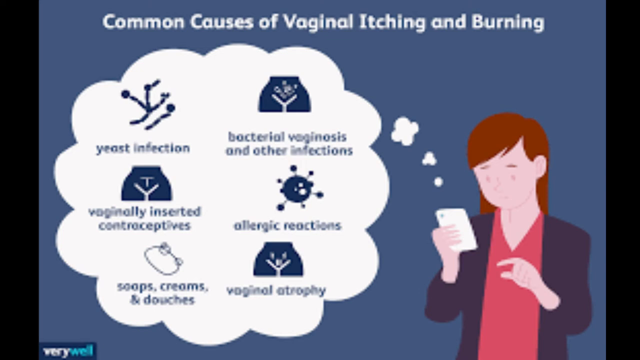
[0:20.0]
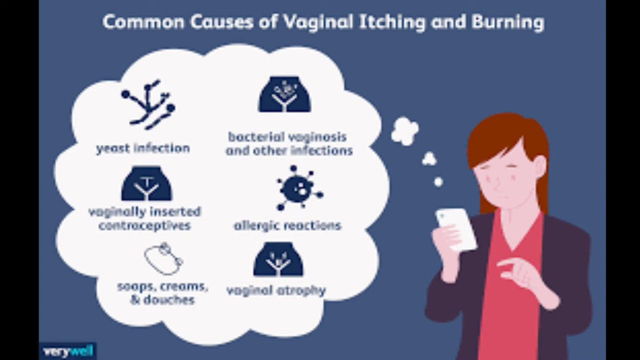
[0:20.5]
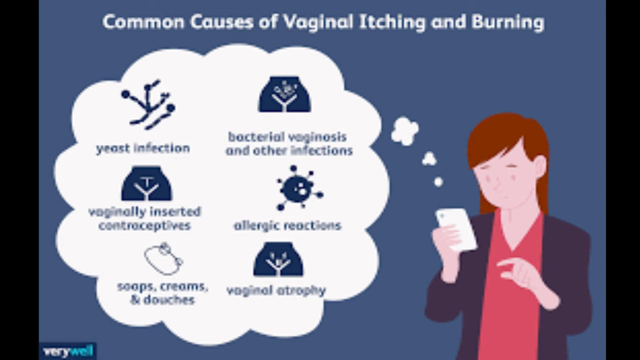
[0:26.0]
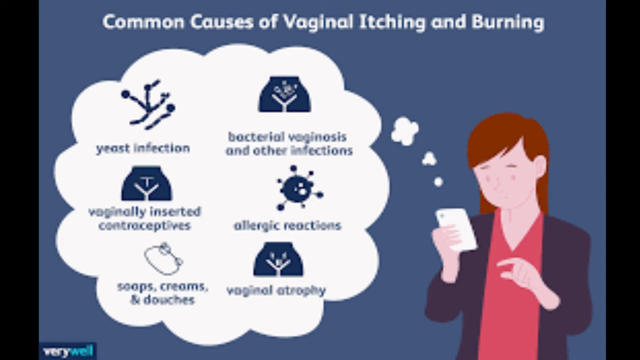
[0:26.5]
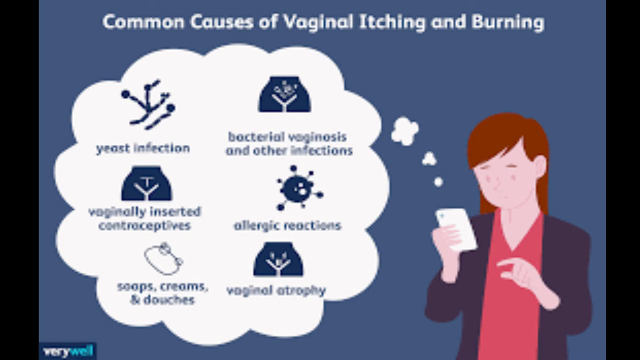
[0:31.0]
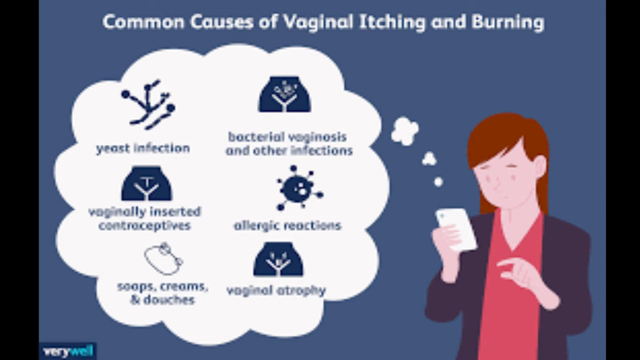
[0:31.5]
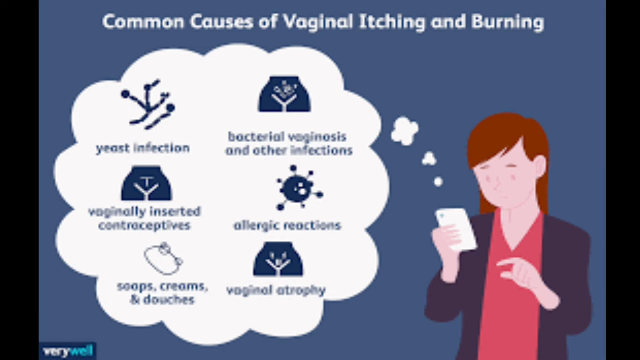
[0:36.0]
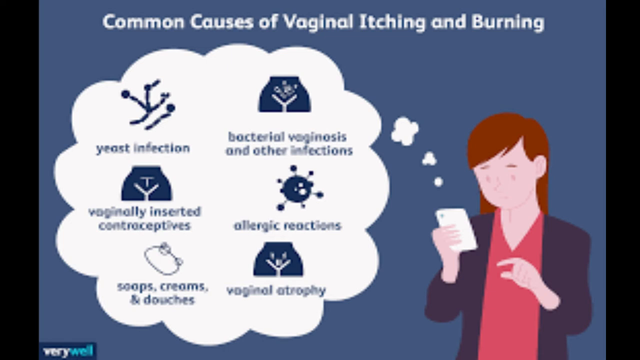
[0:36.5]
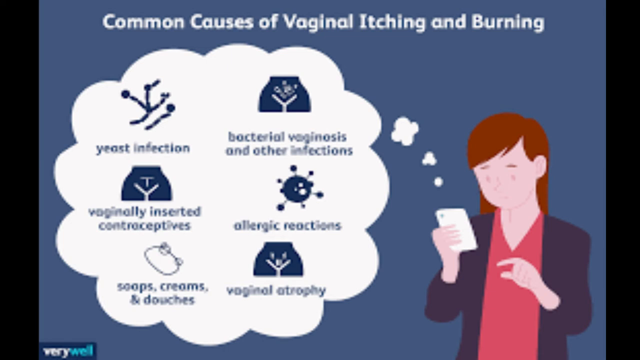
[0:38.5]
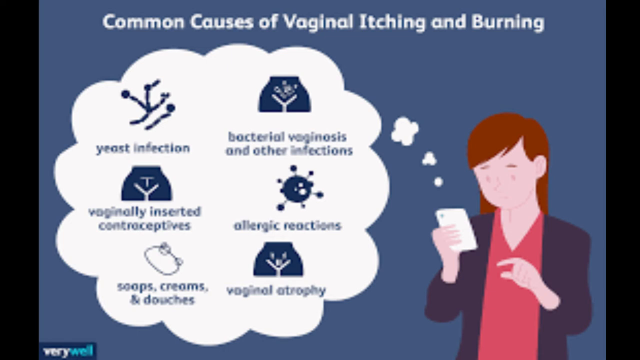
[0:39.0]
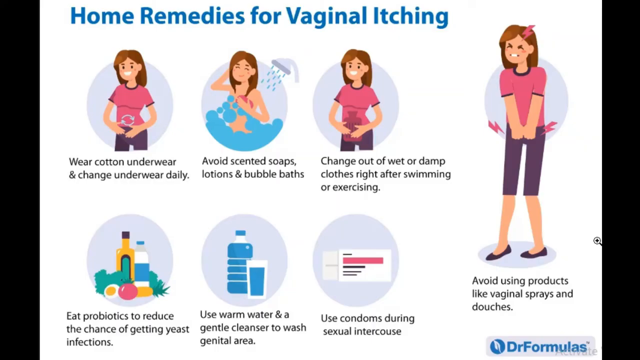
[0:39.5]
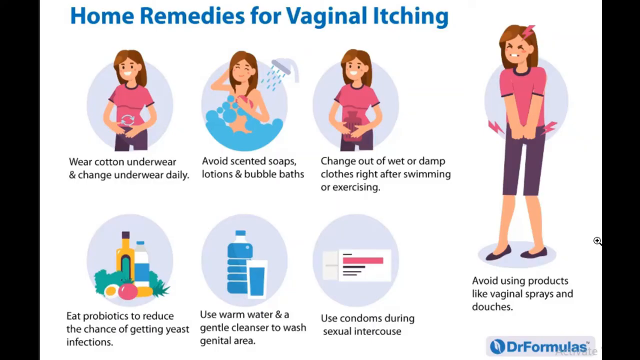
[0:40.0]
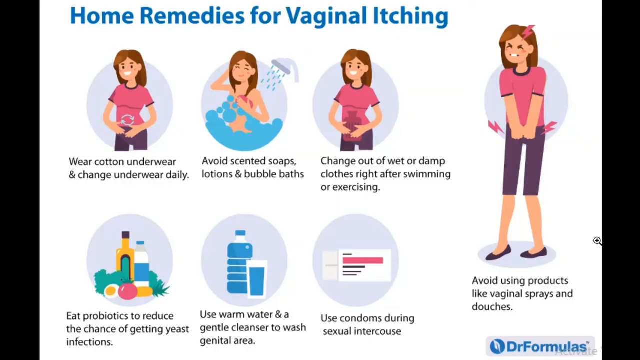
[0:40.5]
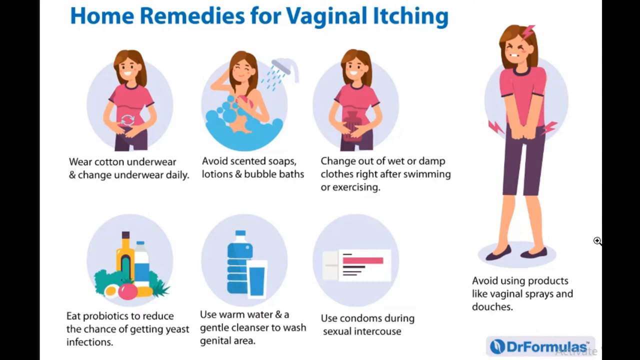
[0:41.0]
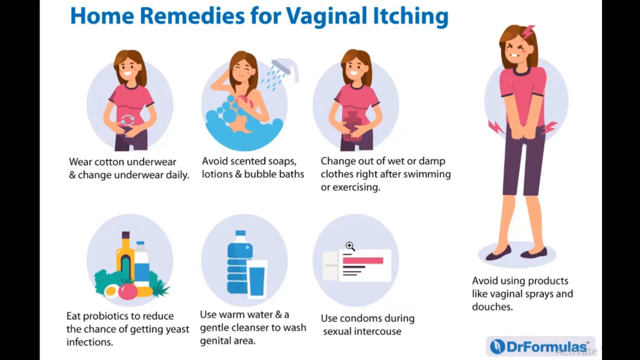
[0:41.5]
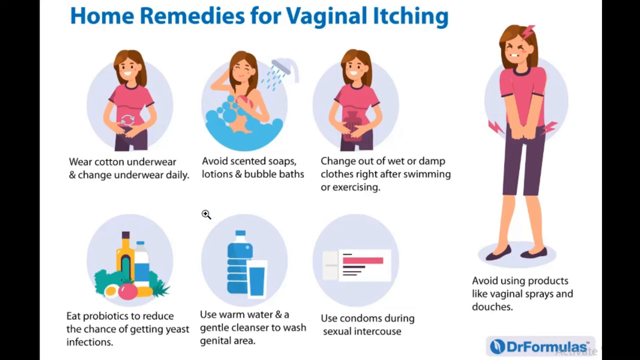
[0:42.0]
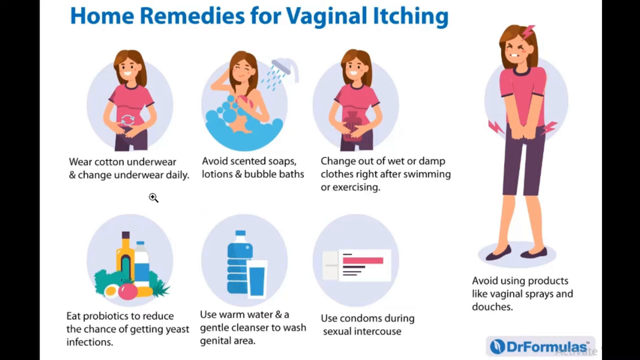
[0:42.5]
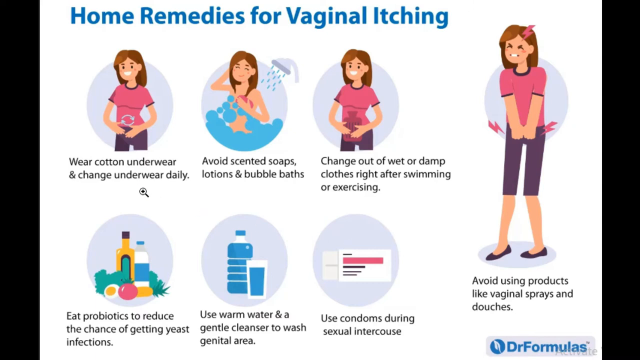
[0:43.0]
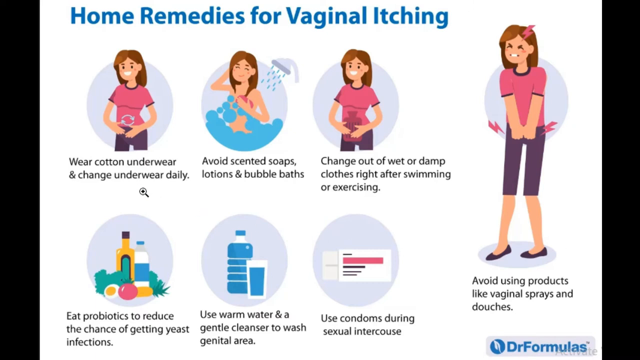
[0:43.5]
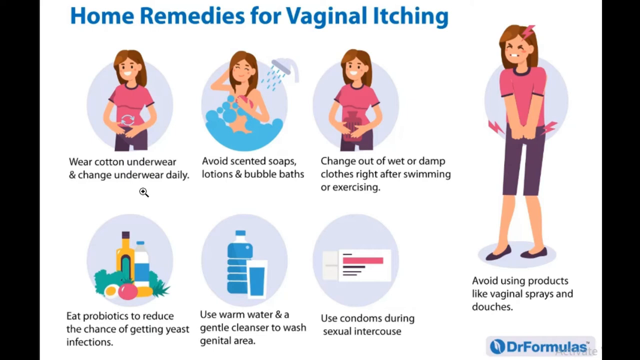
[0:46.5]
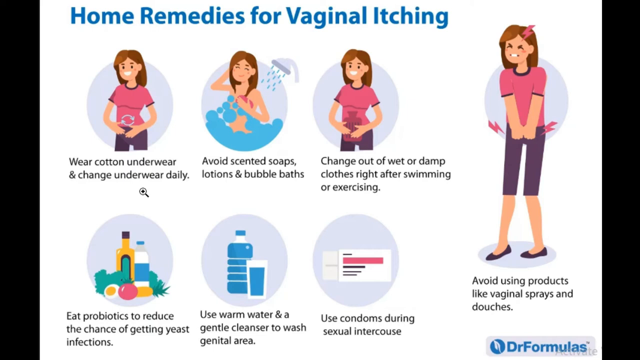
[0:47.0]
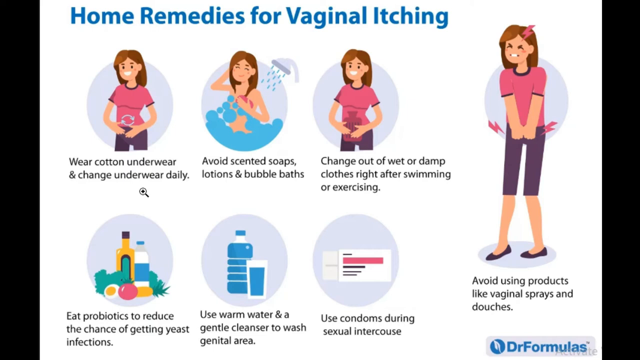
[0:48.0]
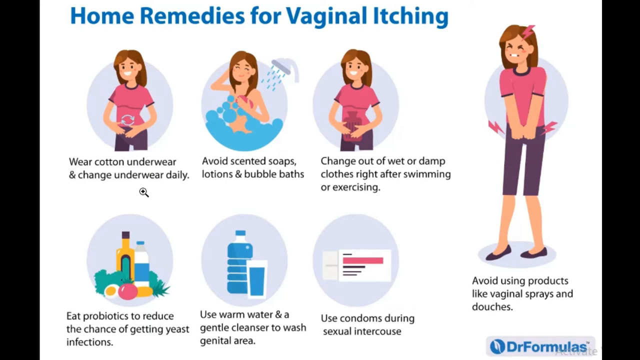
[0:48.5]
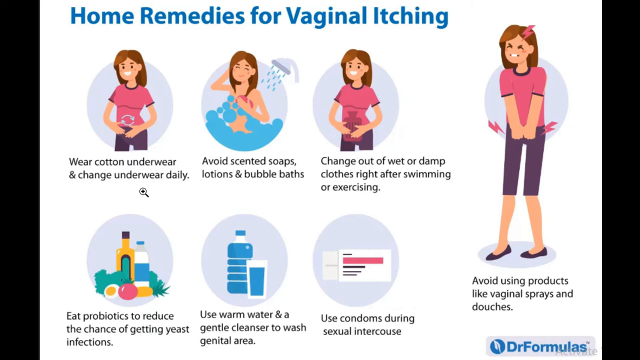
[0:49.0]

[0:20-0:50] The next slide has "common causes of vaginal itching and burning" at the top in bold white letters. Below it is a bubble that appears to be a white cloud shape, listing yeast infection, contraceptive, soaps, creams, allergic reactions and bacterial vaginosis. To the right is an image of a woman with red hair, a red blouse and a dark blue sports coat, looking down at her white phone, with a couple of clouds above her head that seem to suggest she is thinking or looking at something intriguing on her phone. The video then moves to the next slide, which has a white background and is about home remedies for vaginal itching.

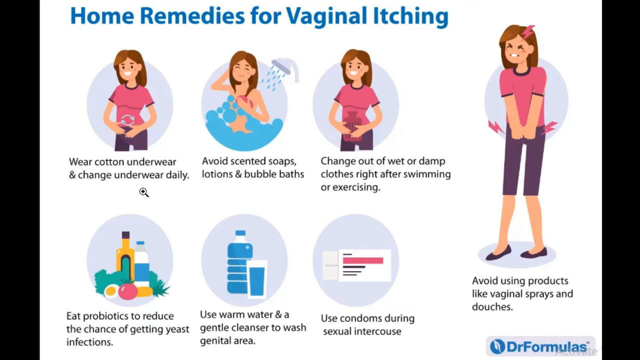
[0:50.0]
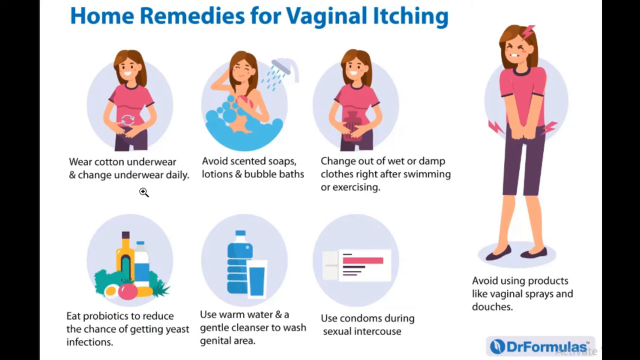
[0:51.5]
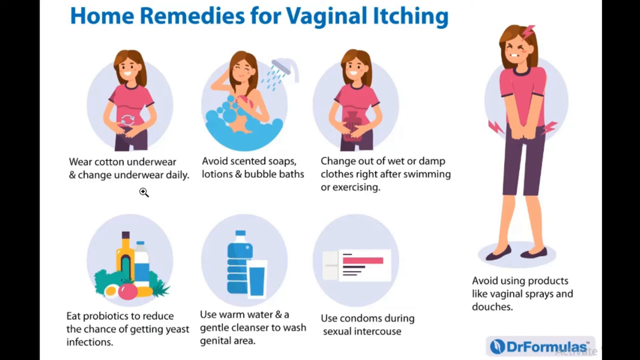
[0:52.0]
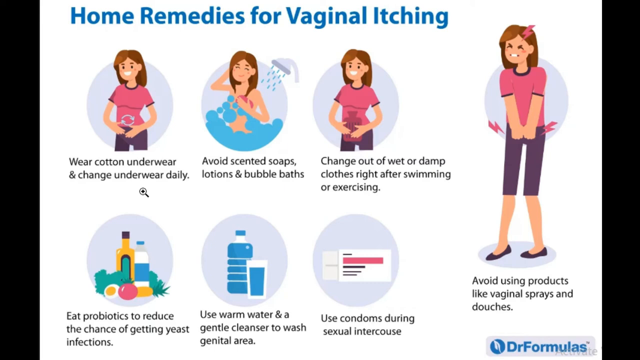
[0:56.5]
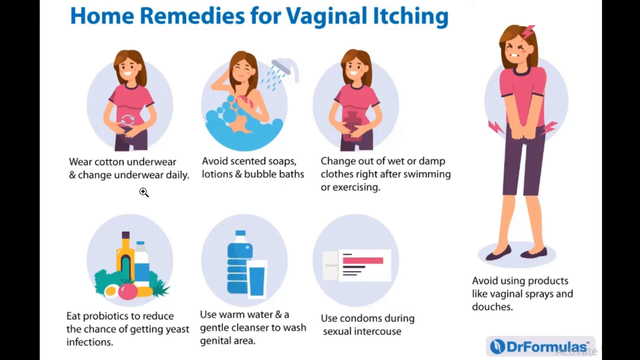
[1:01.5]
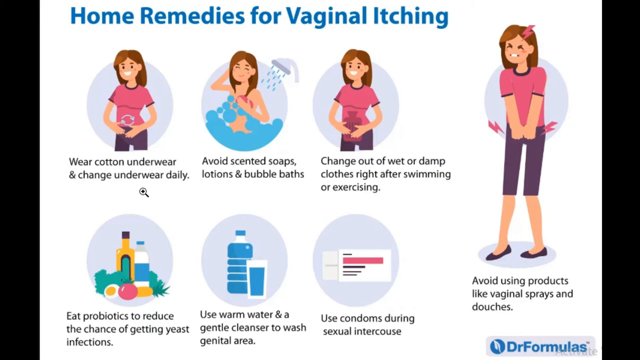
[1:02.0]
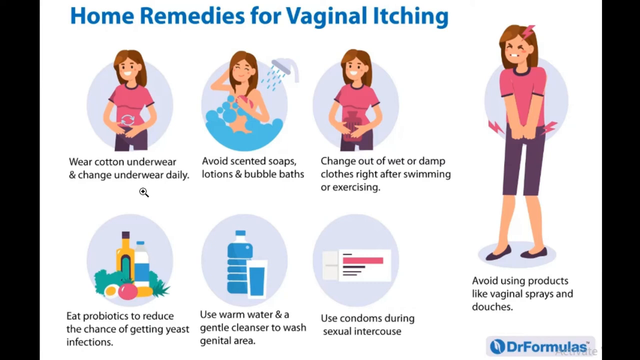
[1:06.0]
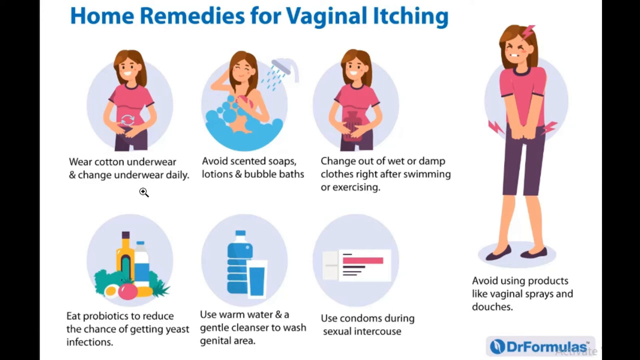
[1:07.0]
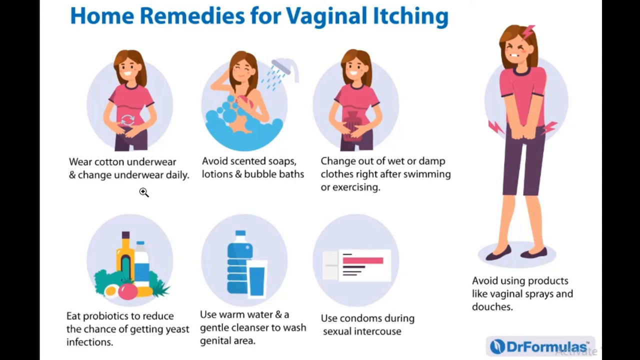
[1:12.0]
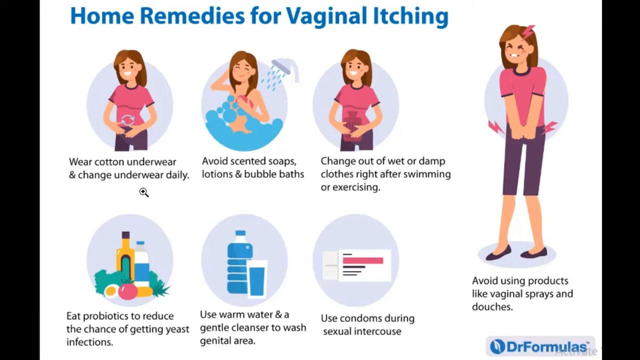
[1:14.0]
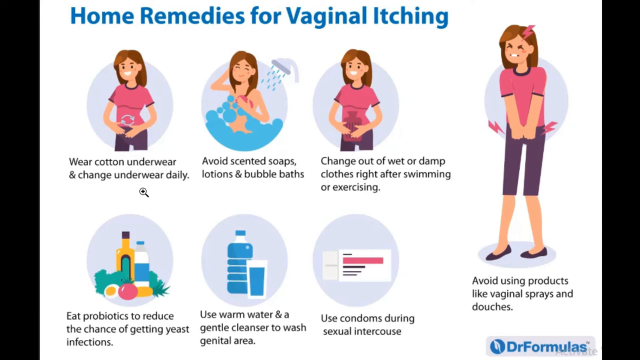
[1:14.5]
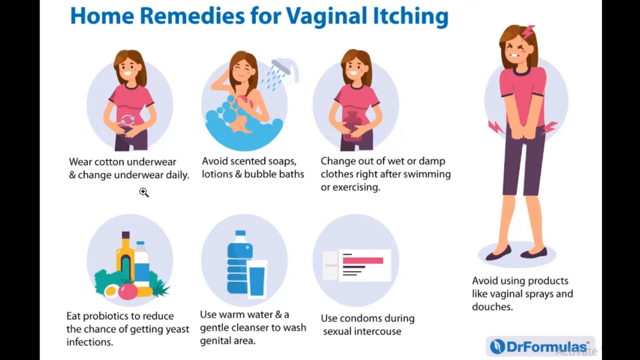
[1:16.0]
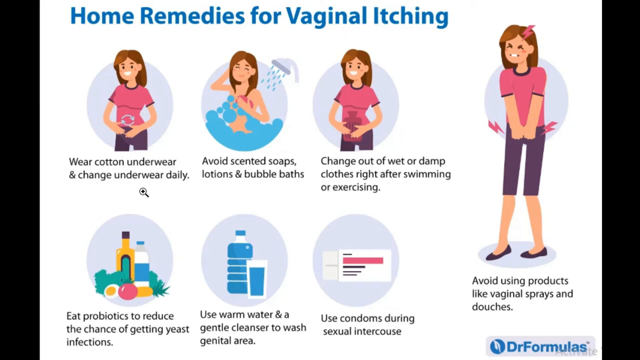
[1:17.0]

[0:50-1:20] A slide presents home remedies for vaginal itching. On the right side of the screen is a disgruntled woman with dark hair and pain on her face, with pink lightning bolts apparently indicating her pain. She wears purple shorts and purple shoes. Below her, text says "avoid using products like vaginal sprays or douches". On the left are six bubbles; the top three show the same illustrated woman, in one showering and in another changing out of her wet clothes. The bubbles cover wearing cotton underwear, eating probiotics to reduce infections, using warm water to clean sensitive areas, and using condoms during sexual intercourse. At the bottom of the screen it says "Dr. Formulas".